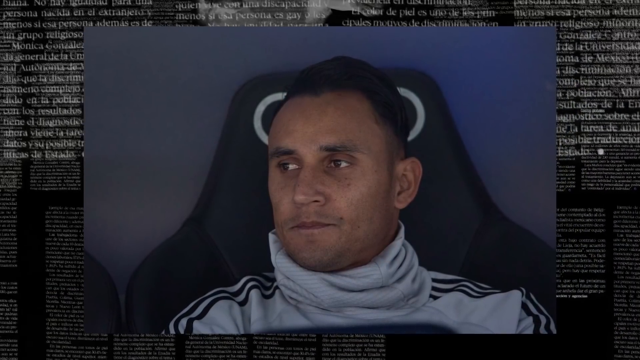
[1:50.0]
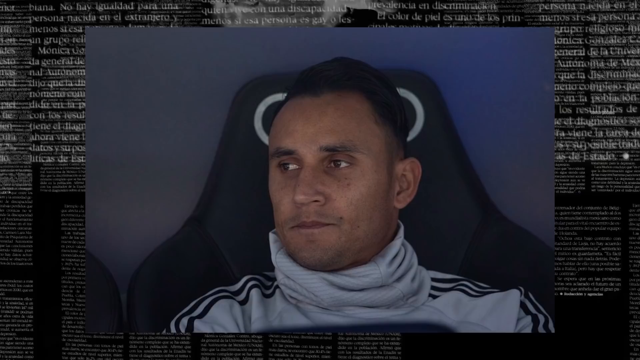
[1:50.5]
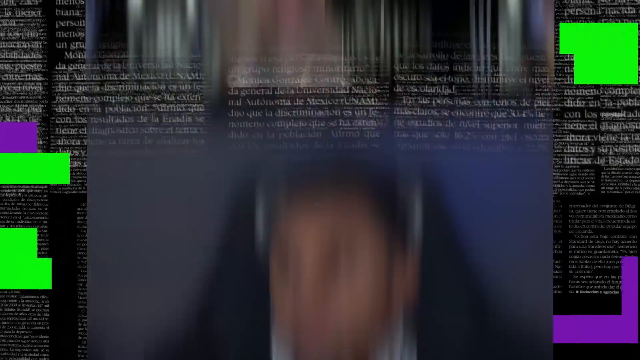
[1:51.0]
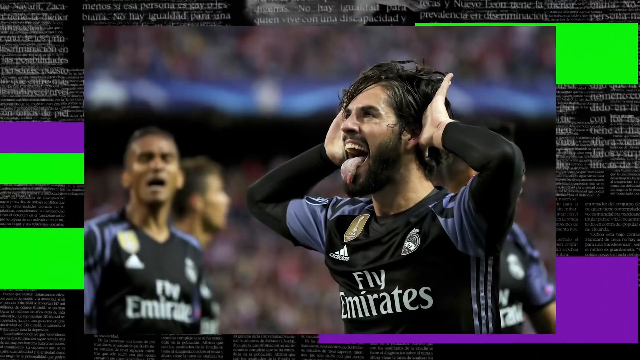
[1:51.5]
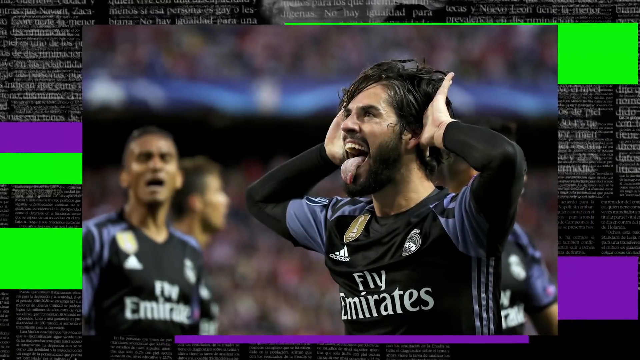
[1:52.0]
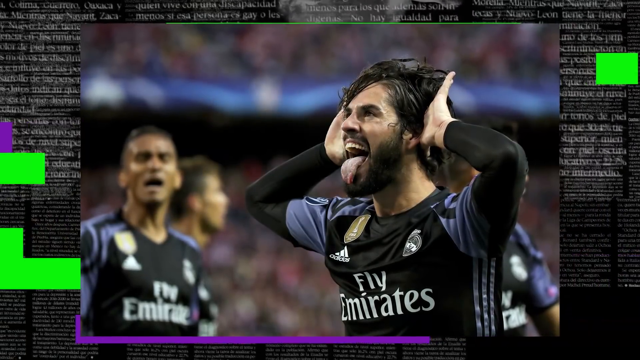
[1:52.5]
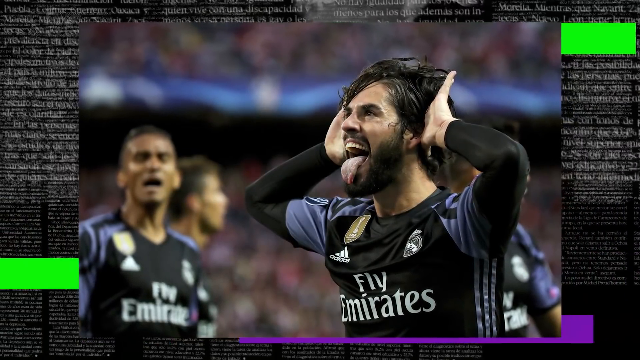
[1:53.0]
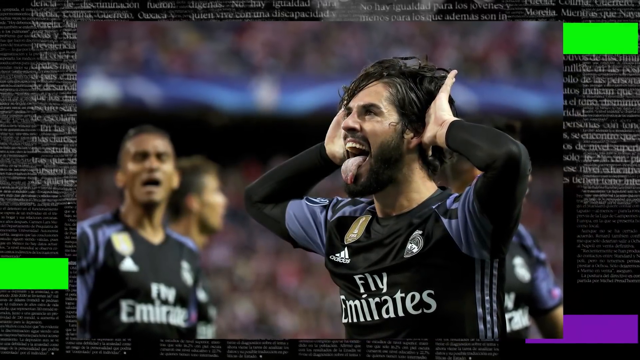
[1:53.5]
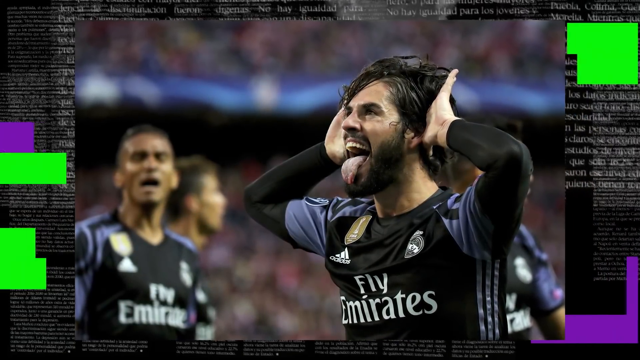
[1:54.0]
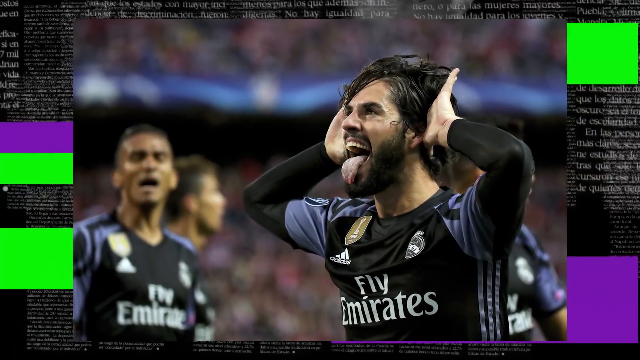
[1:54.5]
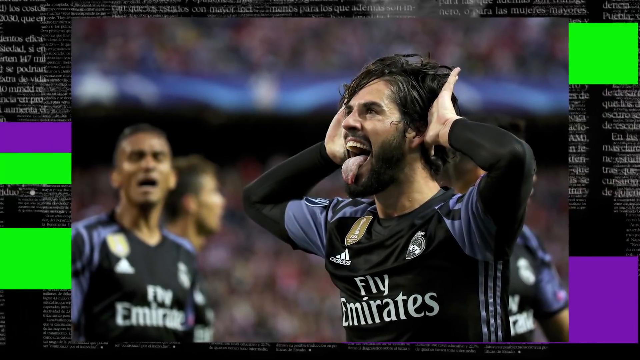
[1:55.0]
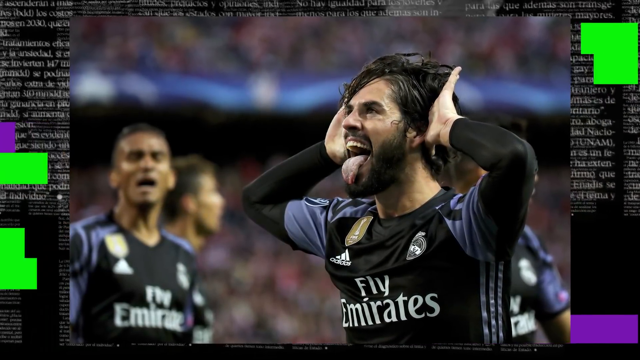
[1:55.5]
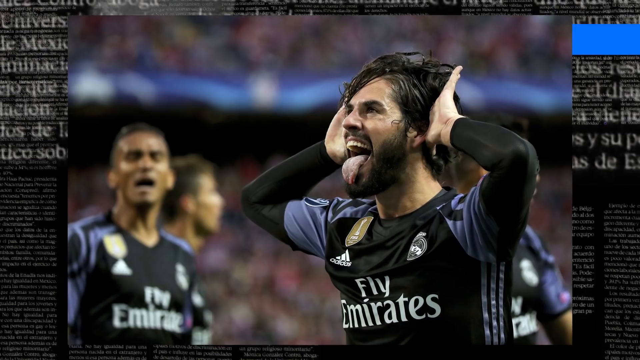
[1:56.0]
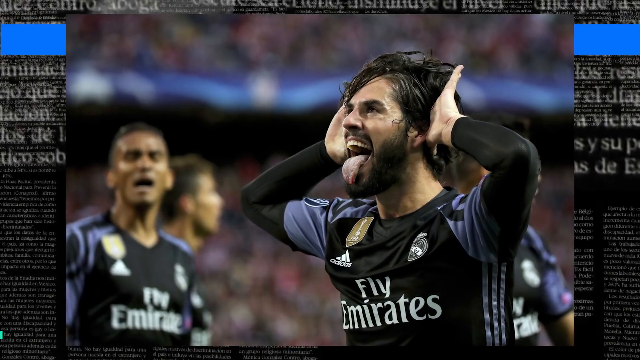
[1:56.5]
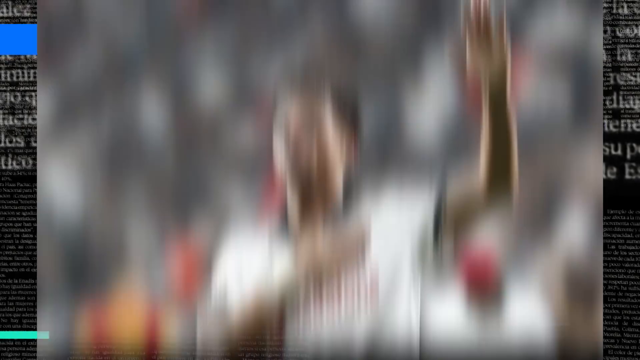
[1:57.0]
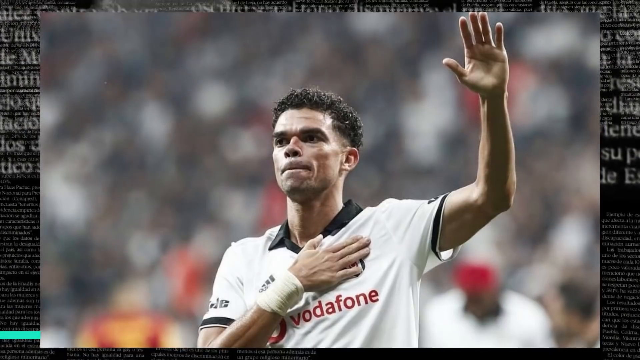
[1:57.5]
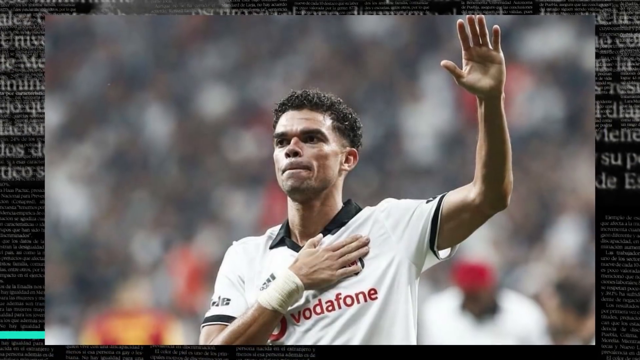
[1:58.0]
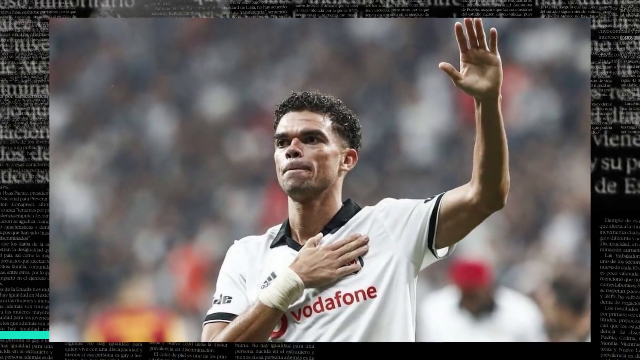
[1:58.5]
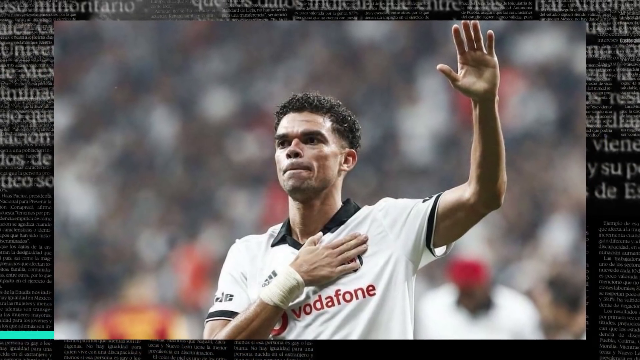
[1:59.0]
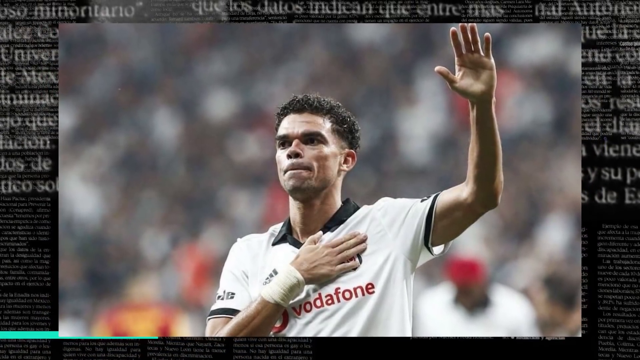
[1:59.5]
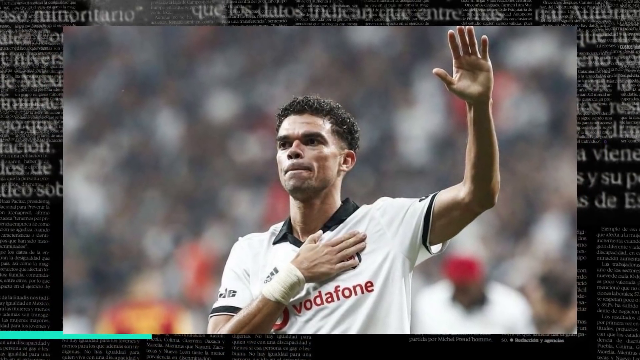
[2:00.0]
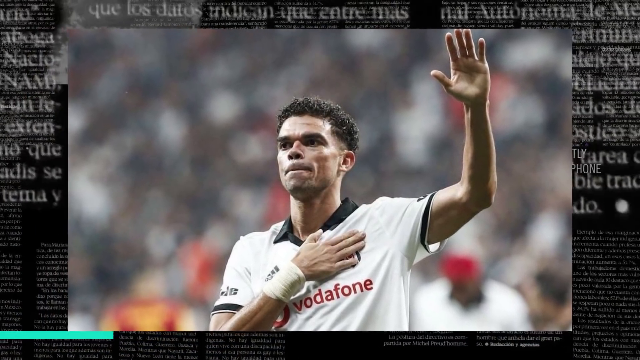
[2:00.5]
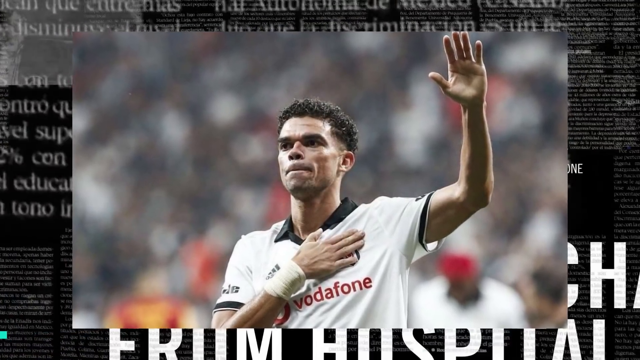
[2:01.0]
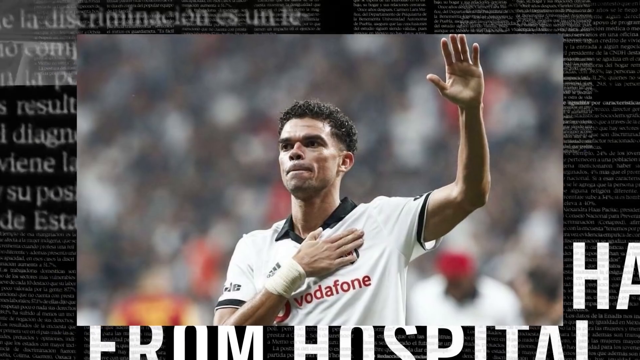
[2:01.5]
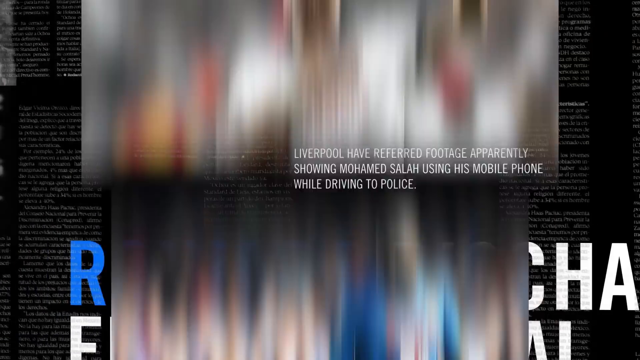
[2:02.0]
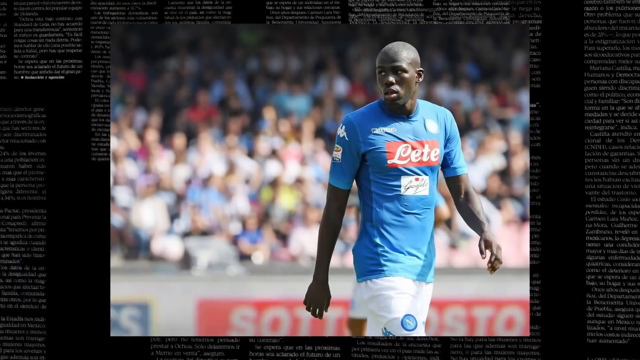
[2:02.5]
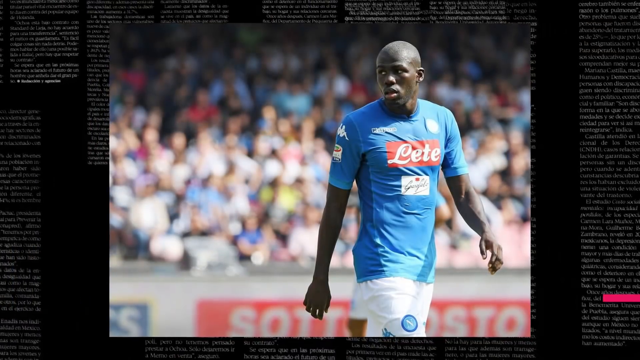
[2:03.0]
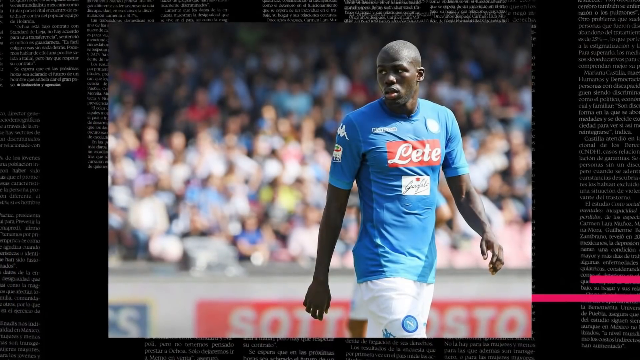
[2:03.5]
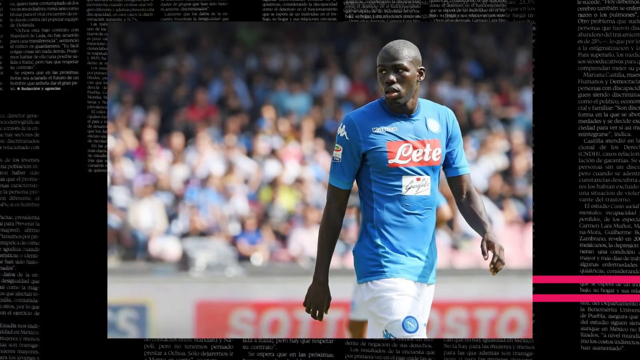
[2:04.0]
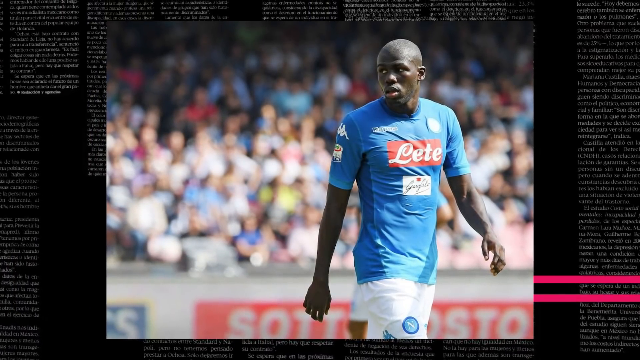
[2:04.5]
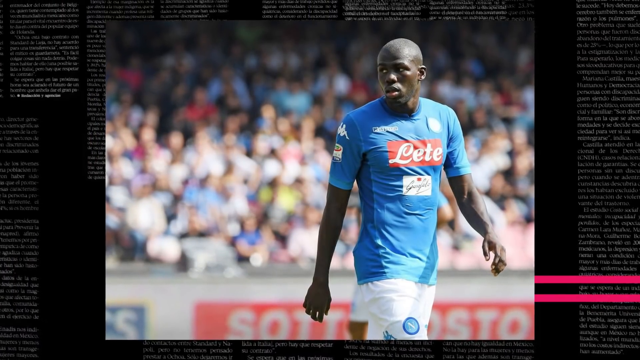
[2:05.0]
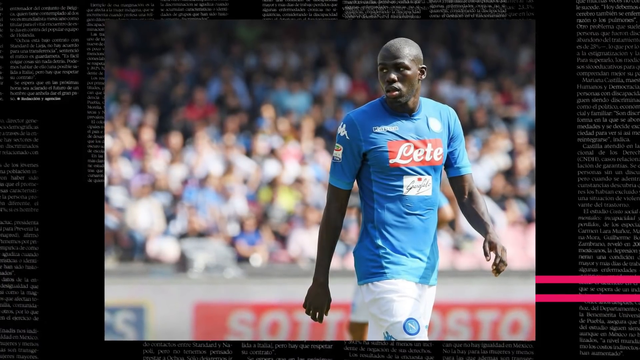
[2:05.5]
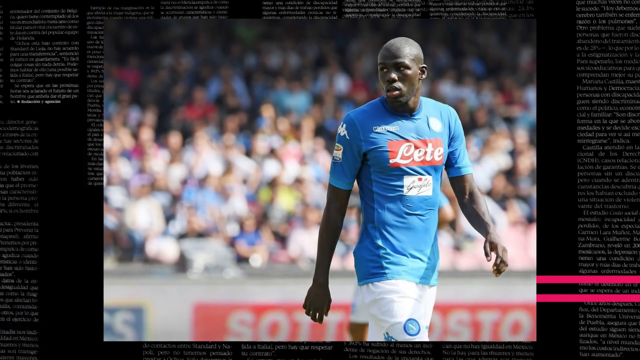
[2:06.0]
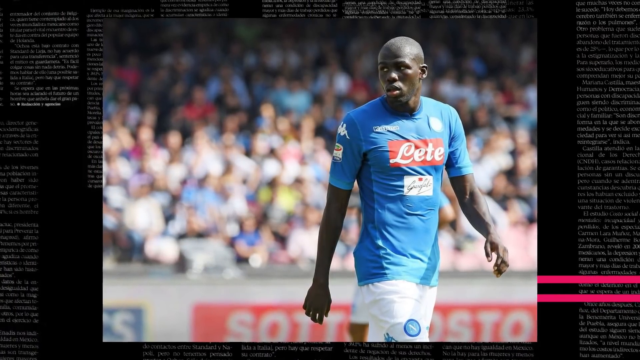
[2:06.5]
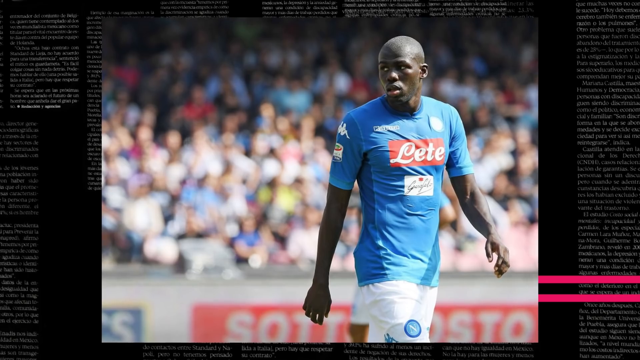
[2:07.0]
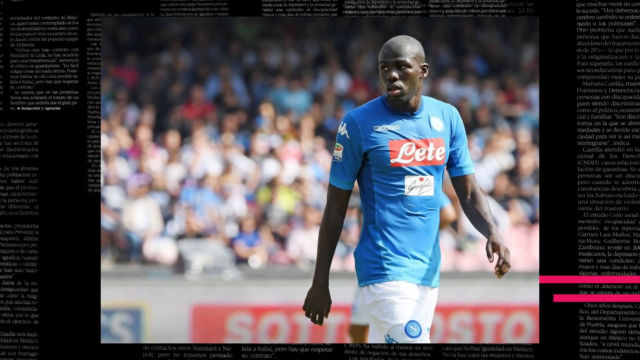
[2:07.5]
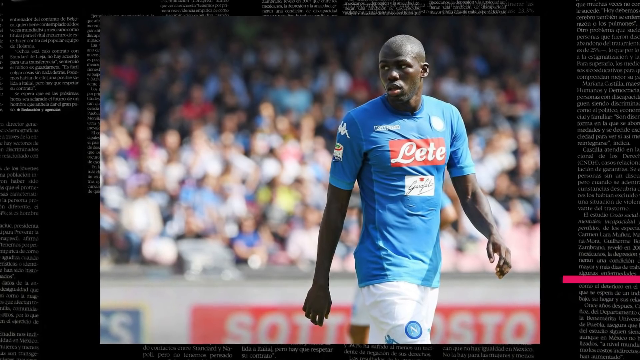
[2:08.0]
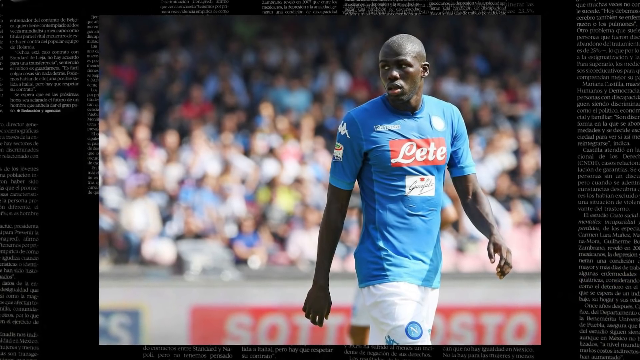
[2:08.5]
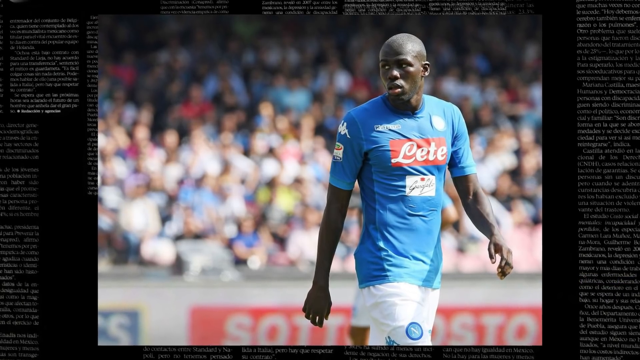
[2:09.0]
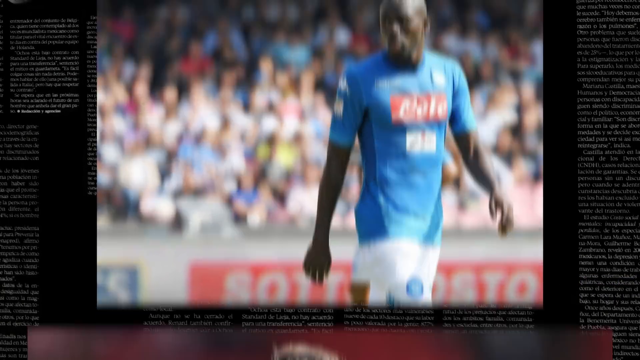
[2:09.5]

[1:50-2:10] A man is shown in a kind of jersey that says "Fly Emirates", with long black sleeves topped by a sort of draped-over purple part and a black main body. It has an Adidas logo and another sort of crest on it. Another man on the left wears the same uniform. The man on the right has his tongue stuck out very far, almost to the end of his chin, and holds both hands open wide to his ears as if saying he is listening. The man on the left has his mouth slightly open, as though just watching things happen. Next is a man with caramel-colored skin, curly black hair and a sort of serious look. He holds his left hand up with the palm open wide, while his right arm and hand are over the left side of his chest, touching where his heart might be. His white shirt has "Vodafone" written on it. Some text behind him kind of scrolls up, and it is almost impossible to read any of the letters. The next image shows a man in a blue kind of jersey and white shorts; the jersey has the word "LETE" written in white on a square of a kind of orange or rose color. The man has a kind of shaved head and is looking to the viewer's left.